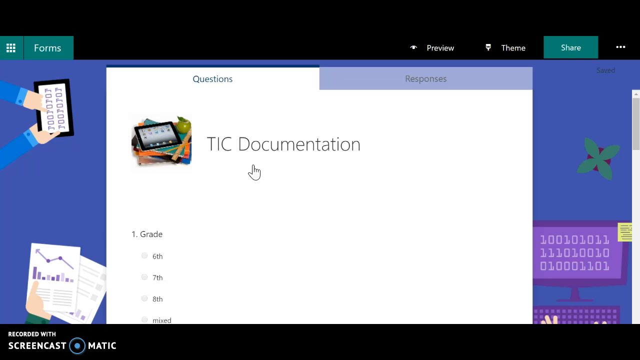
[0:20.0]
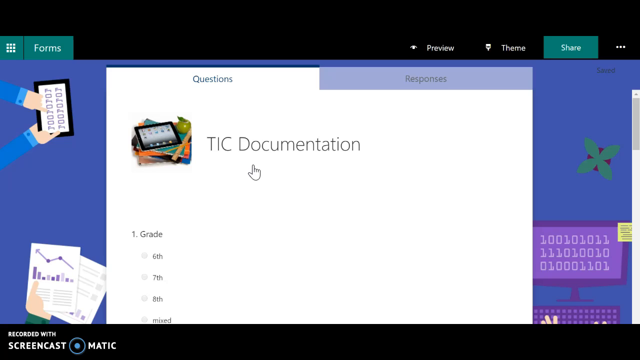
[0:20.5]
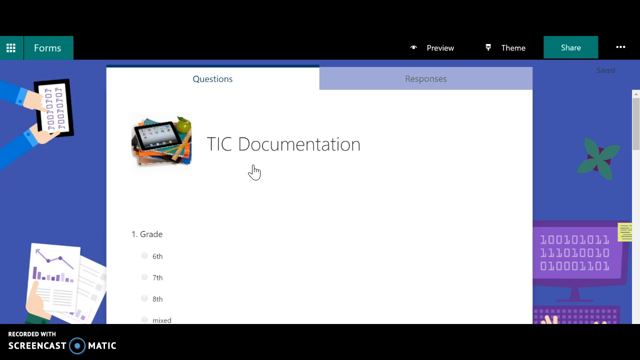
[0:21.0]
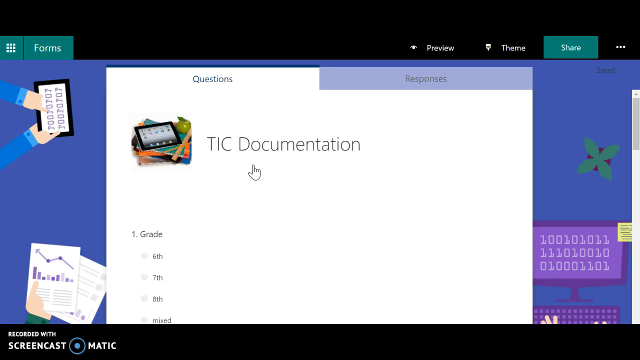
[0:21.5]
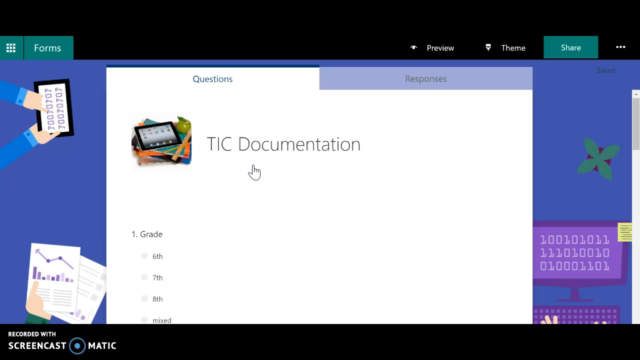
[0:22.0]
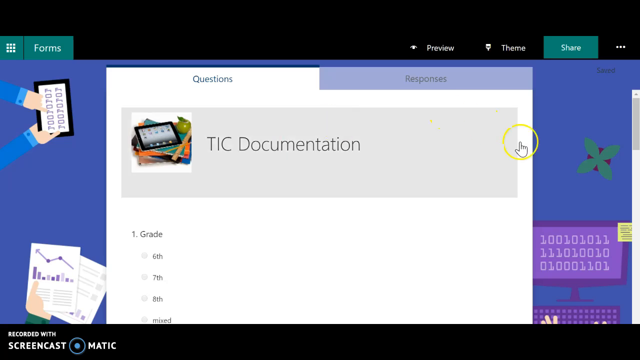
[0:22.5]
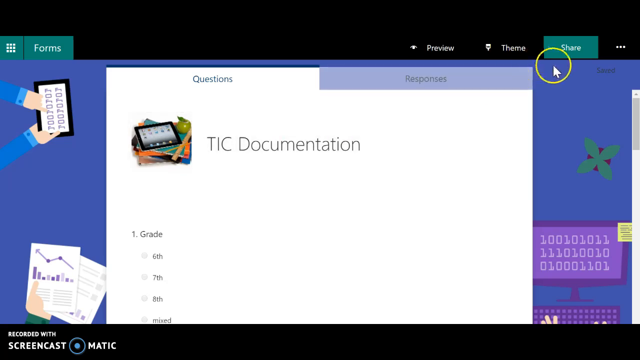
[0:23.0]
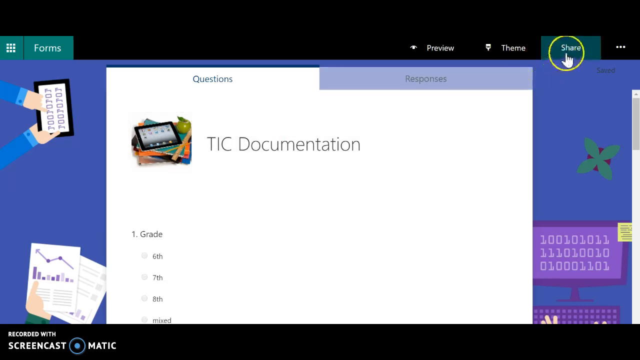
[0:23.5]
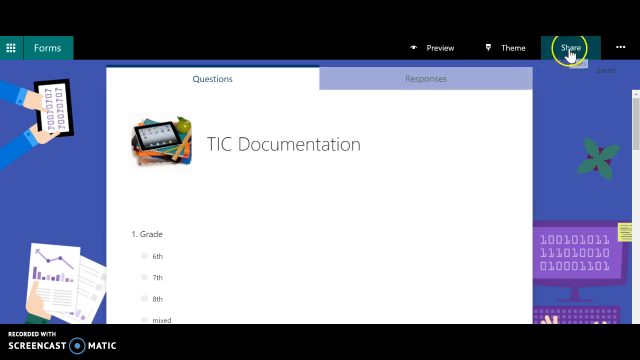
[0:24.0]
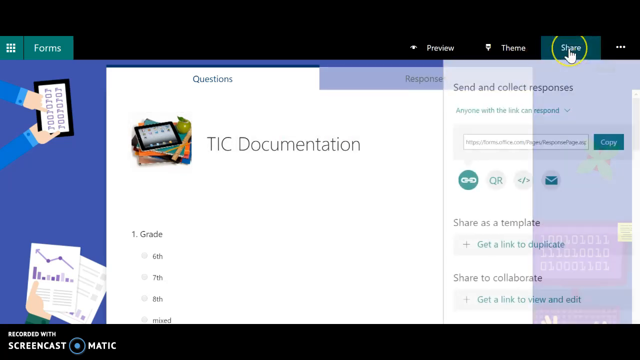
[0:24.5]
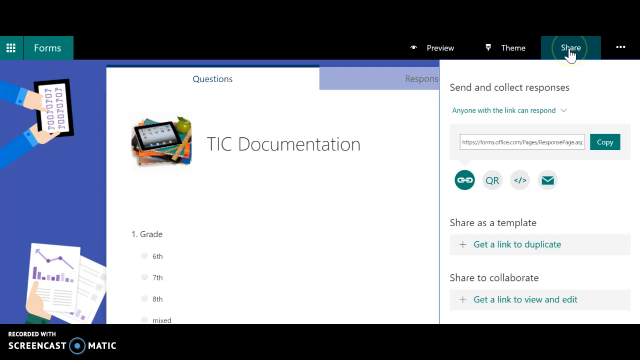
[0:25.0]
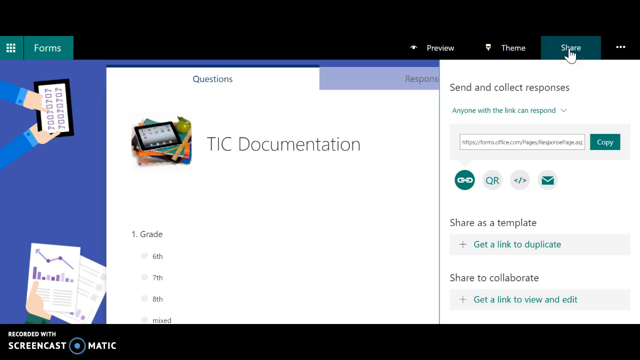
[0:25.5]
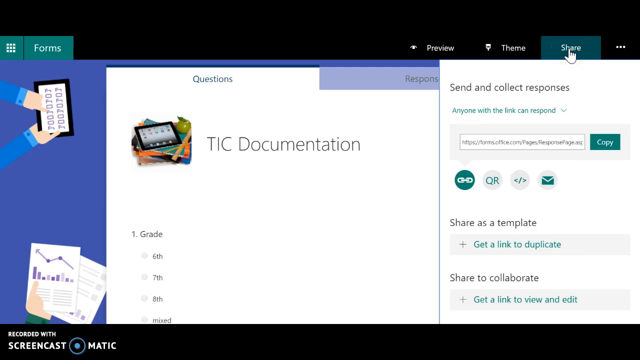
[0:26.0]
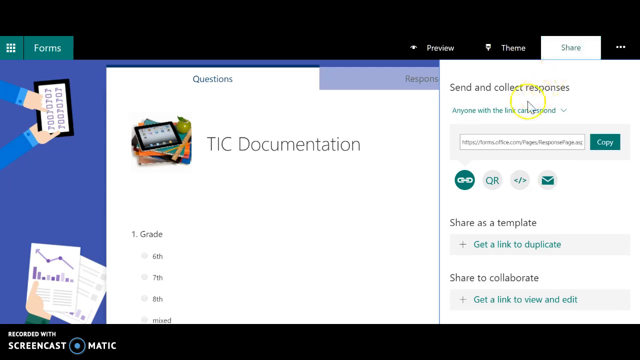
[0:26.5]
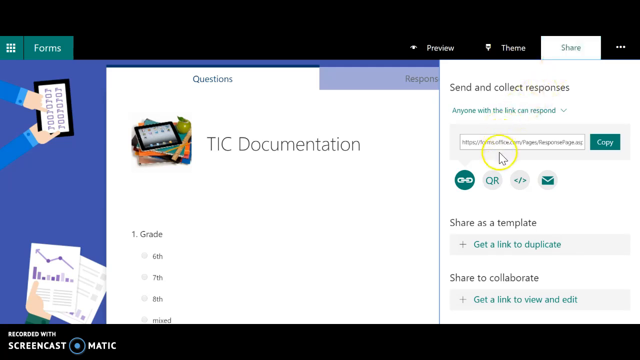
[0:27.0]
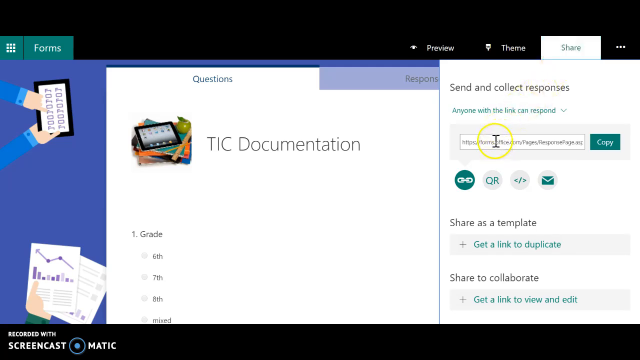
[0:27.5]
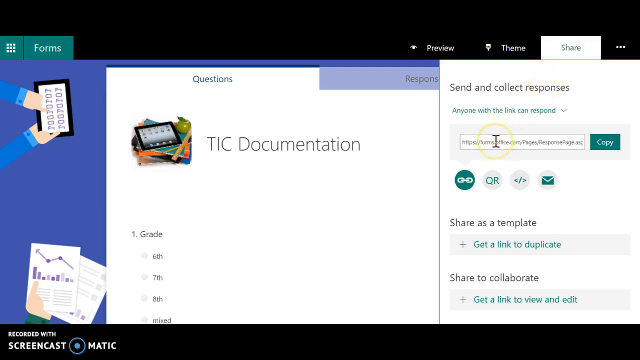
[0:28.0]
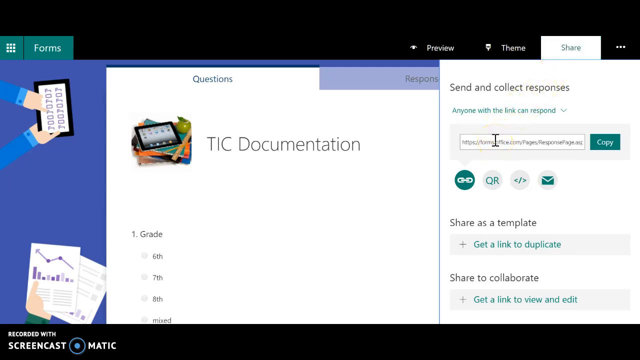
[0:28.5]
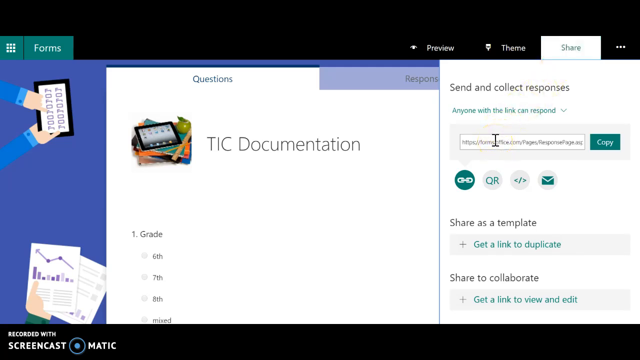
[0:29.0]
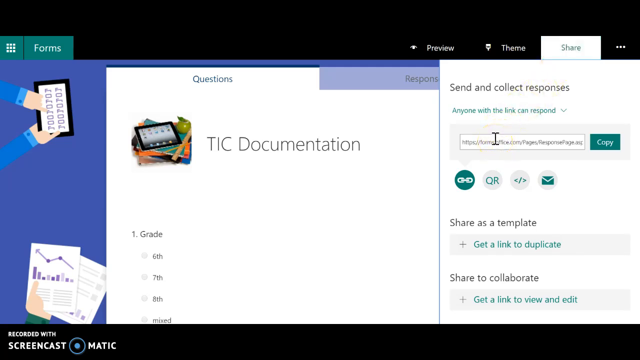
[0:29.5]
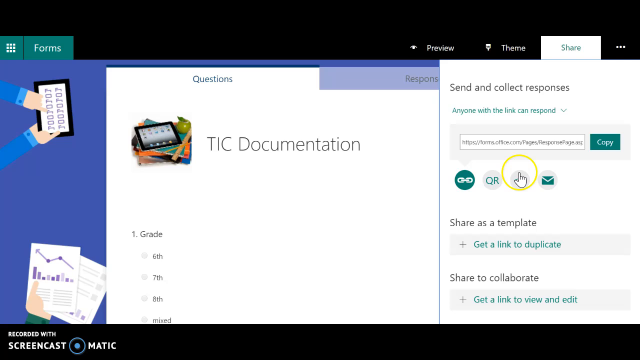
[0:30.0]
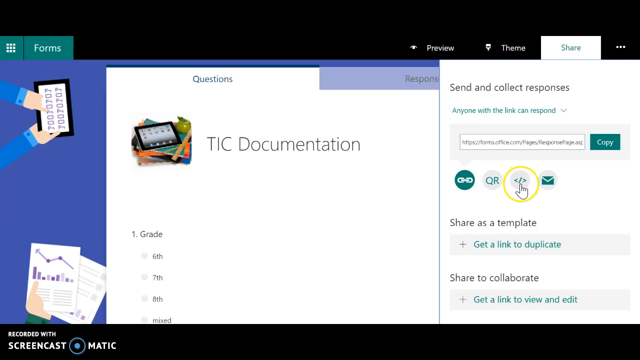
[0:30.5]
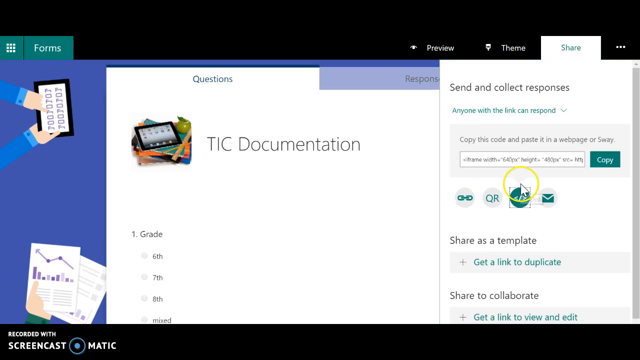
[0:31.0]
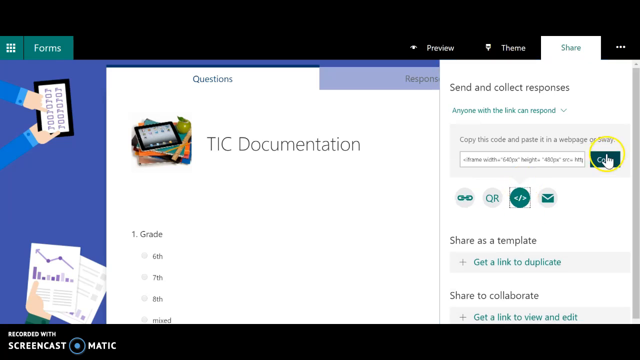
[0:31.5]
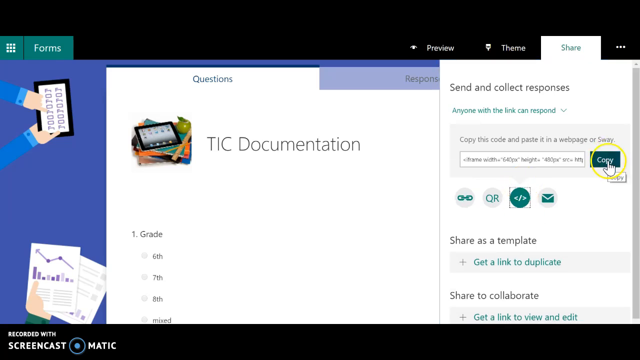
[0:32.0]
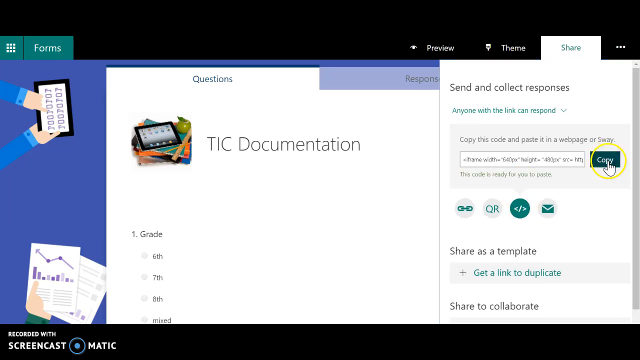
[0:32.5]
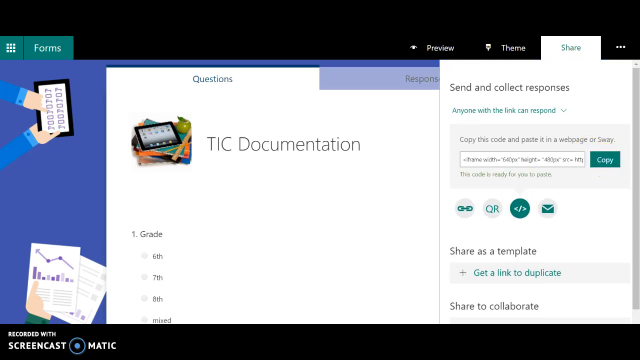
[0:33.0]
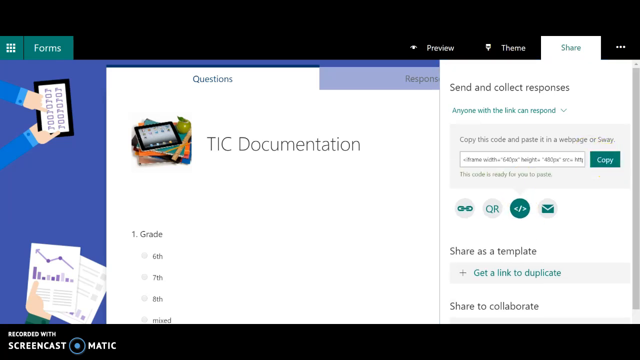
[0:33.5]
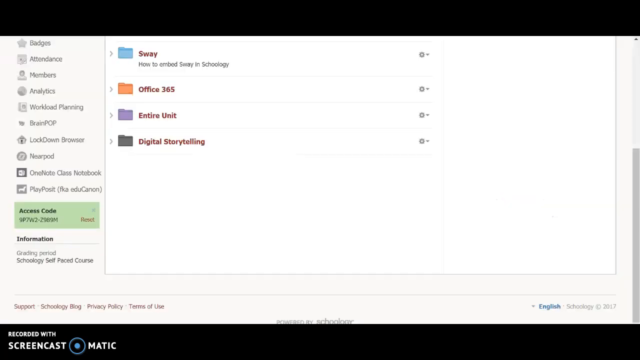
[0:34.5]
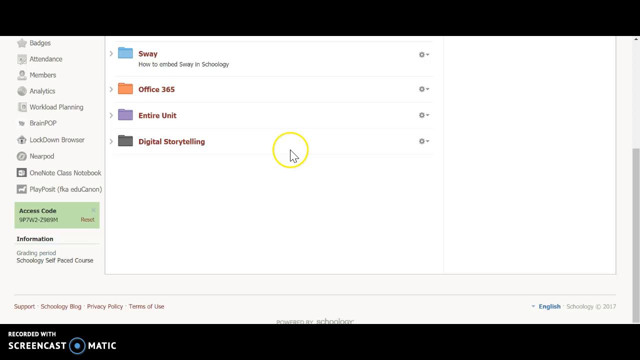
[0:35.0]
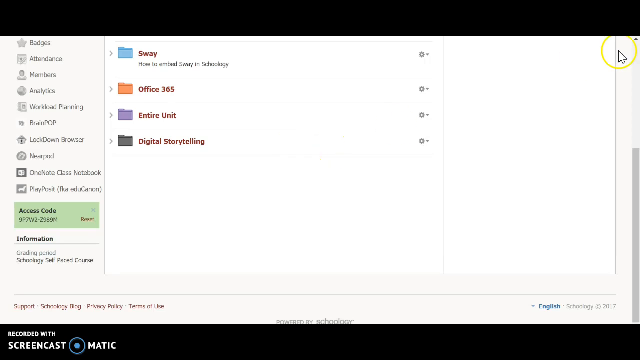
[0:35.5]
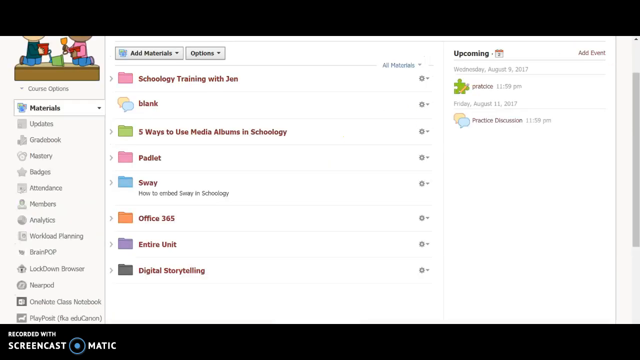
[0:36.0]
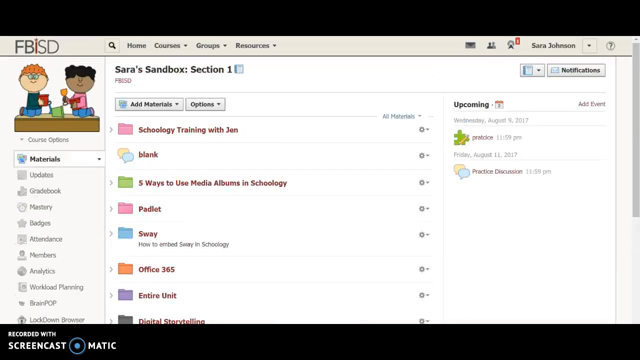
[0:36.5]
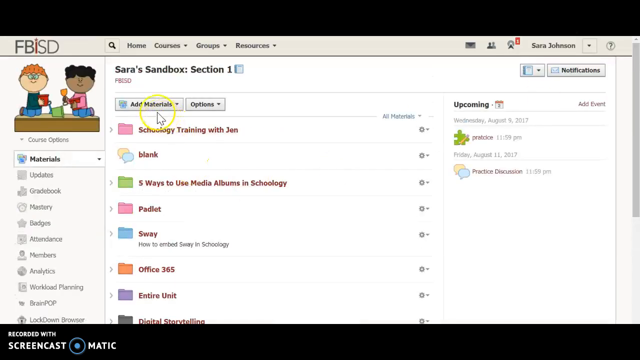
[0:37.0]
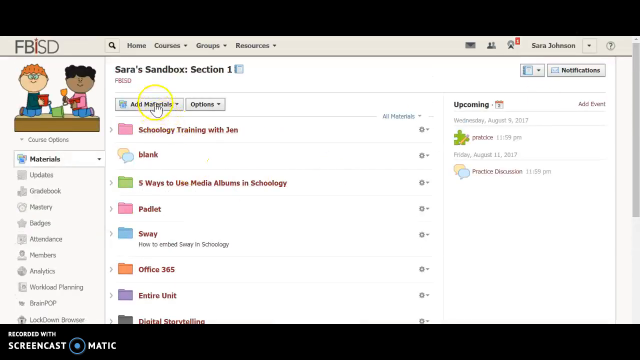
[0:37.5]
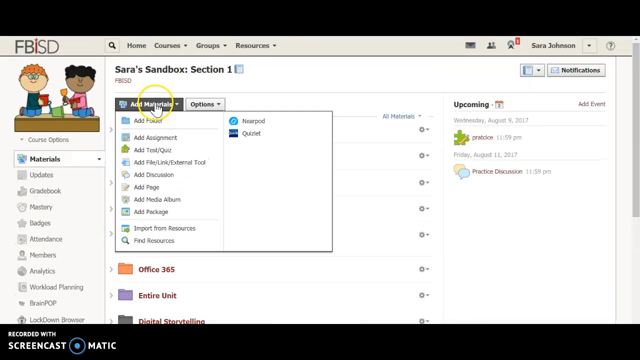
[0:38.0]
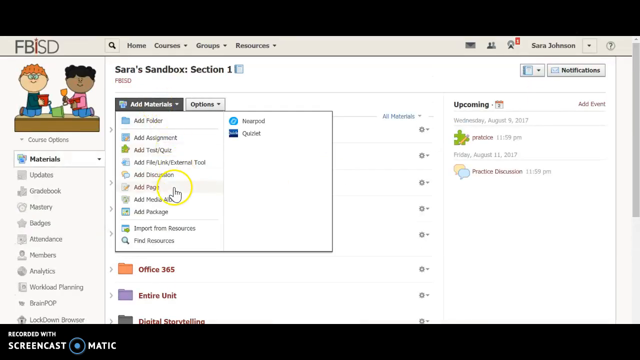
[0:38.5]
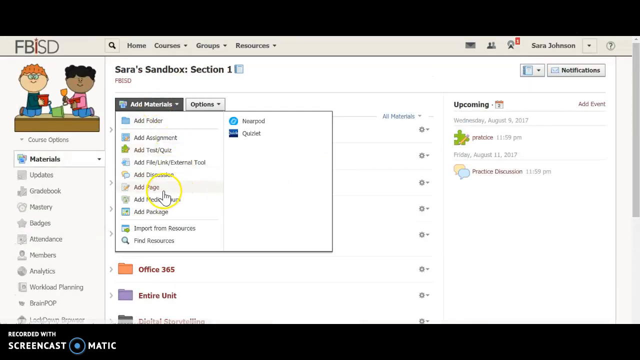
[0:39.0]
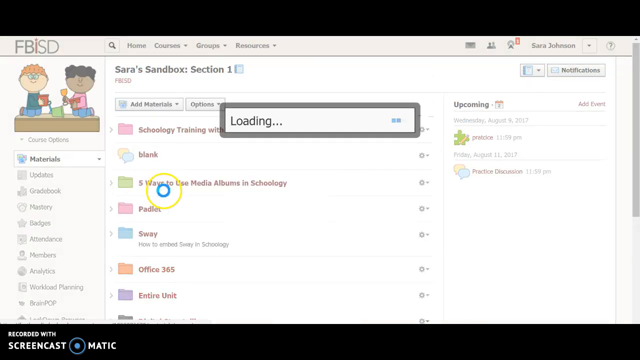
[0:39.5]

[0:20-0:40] A black background appears, followed by a blue screen. It has nine dots on the left, then the words "Forms," "Preview," "Themes" and "Share," and three dots. Underneath it says "Questions and Responses," with Questions selected. The page says "TIC Documentation" and "One Grade," with some choices to select underneath. The user goes to Share, and it says "Send and Collect Responses. Anyone with the link can respond. Simply click on the link." The blue screen shows an image of a person typing on a tablet, with some pages toward the bottom. On the right is a green flower, and underneath that is a screen with 1's and 0's on it. The TIC Documentation page also shows a picture of a tablet. The background is black with white letters, and it turns green when highlighted.